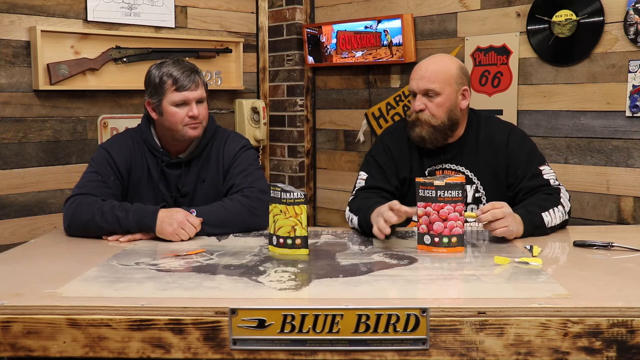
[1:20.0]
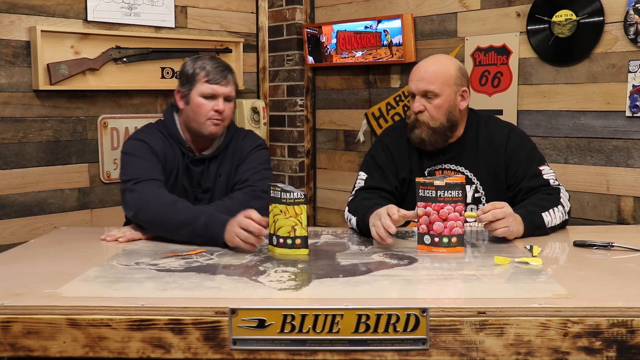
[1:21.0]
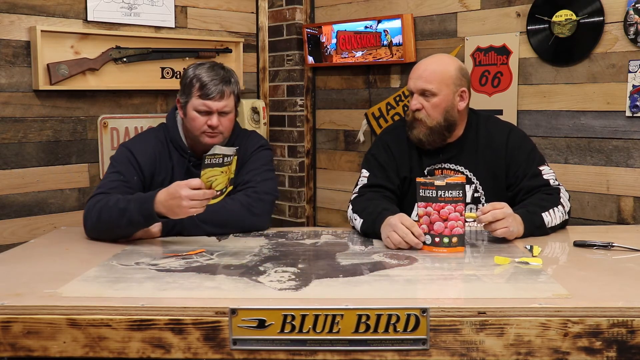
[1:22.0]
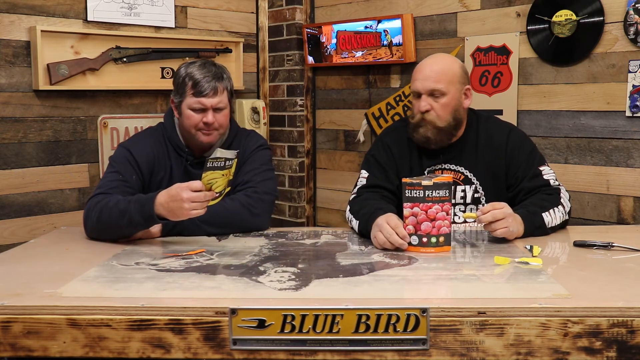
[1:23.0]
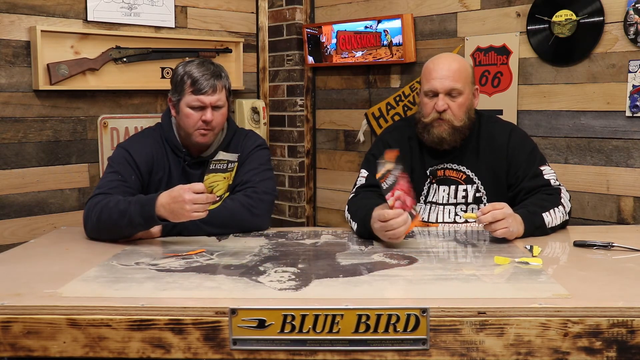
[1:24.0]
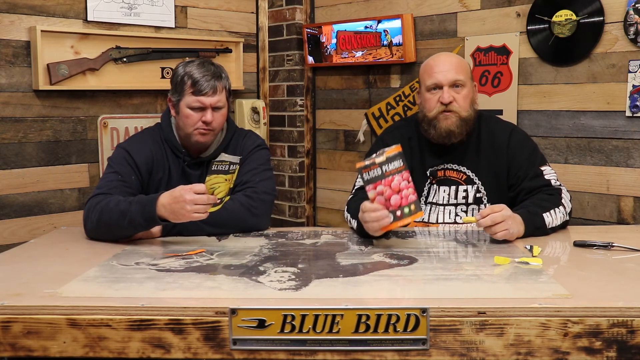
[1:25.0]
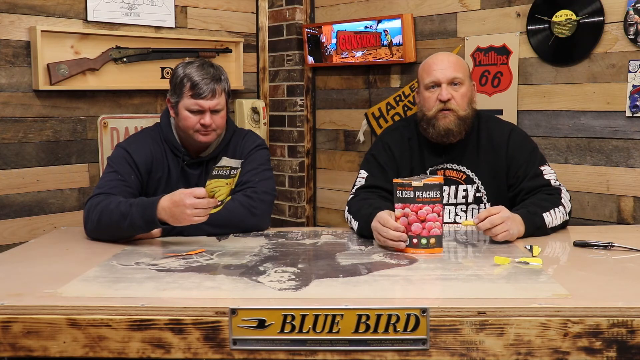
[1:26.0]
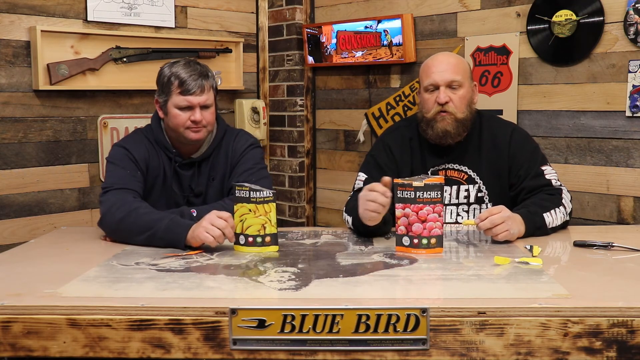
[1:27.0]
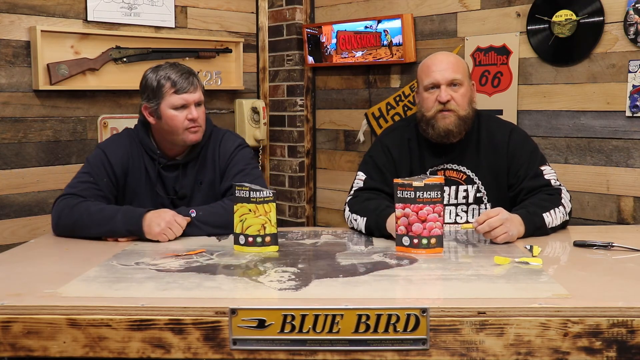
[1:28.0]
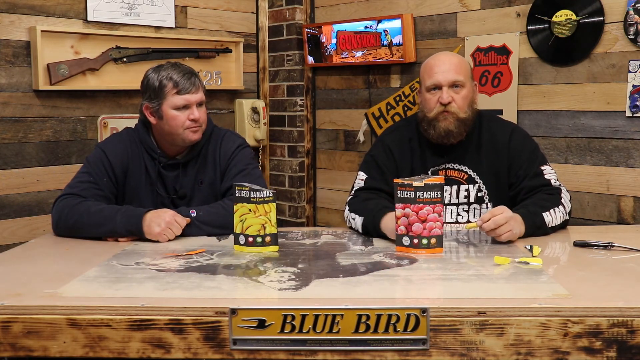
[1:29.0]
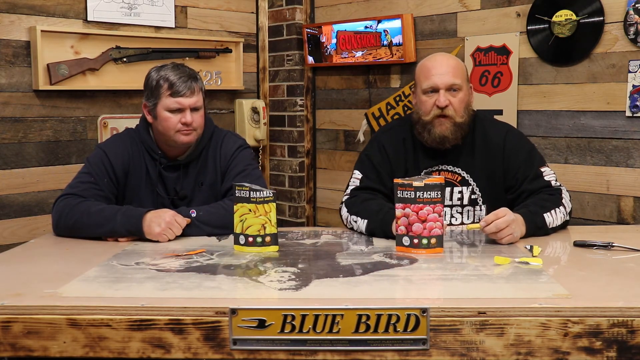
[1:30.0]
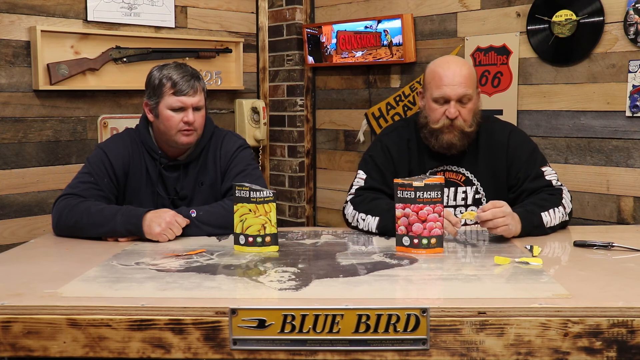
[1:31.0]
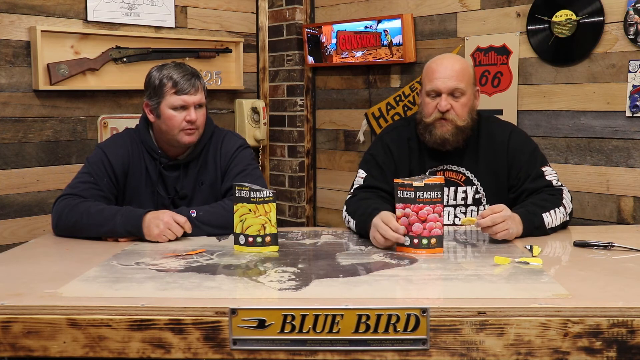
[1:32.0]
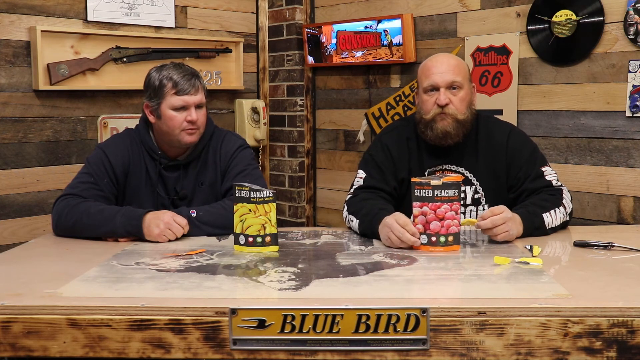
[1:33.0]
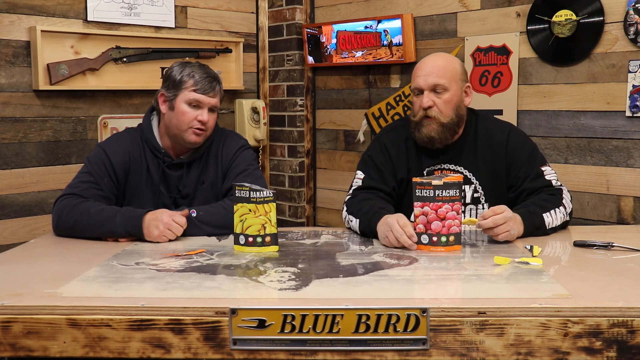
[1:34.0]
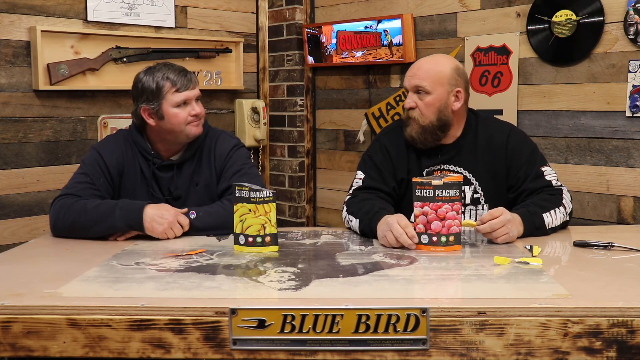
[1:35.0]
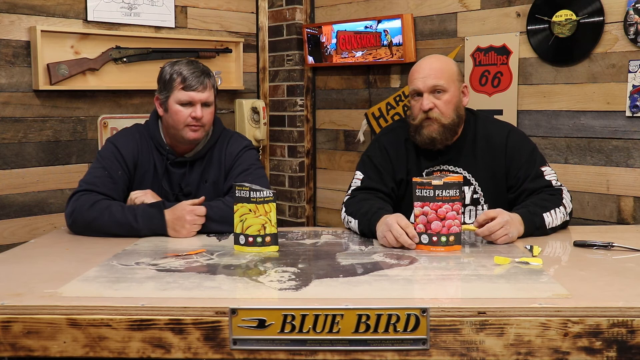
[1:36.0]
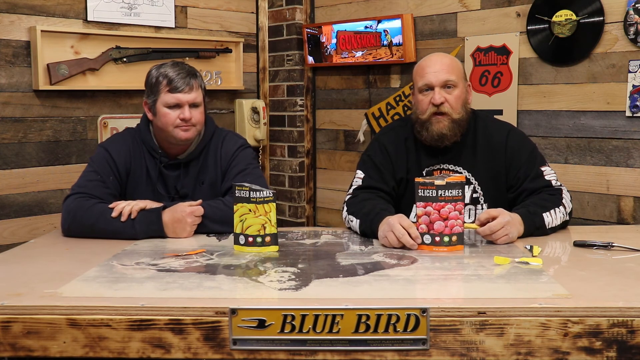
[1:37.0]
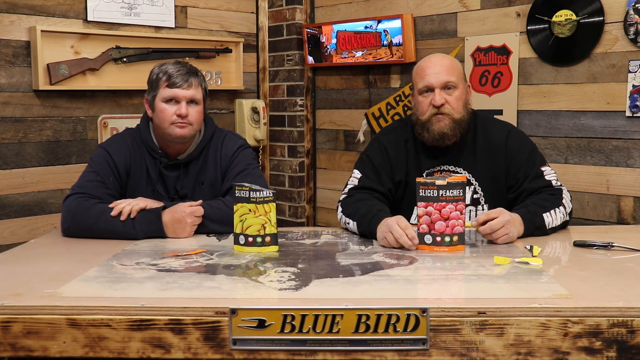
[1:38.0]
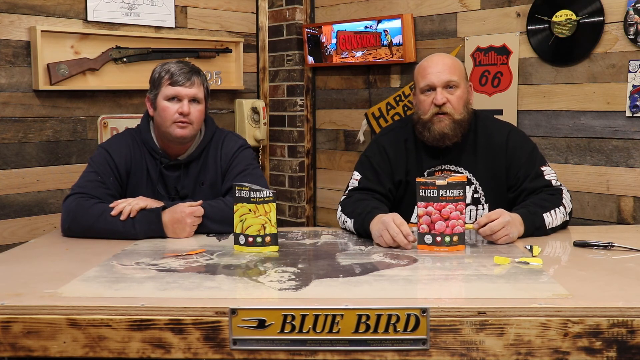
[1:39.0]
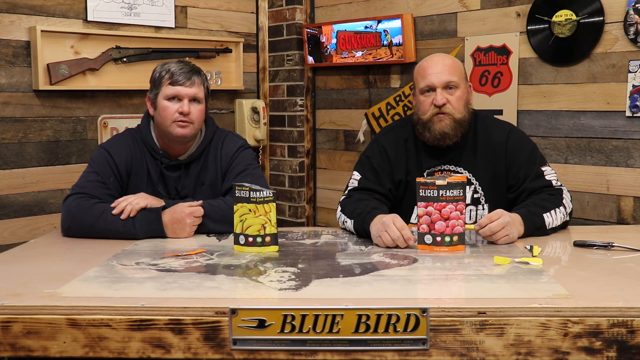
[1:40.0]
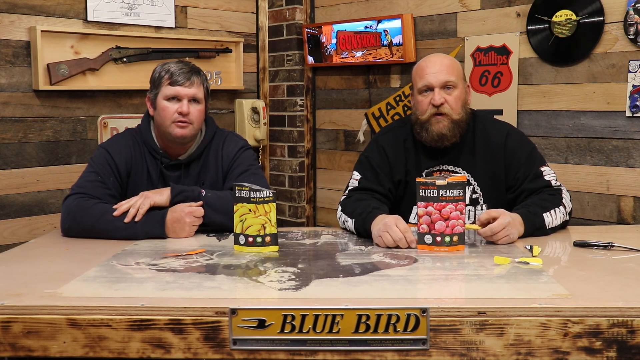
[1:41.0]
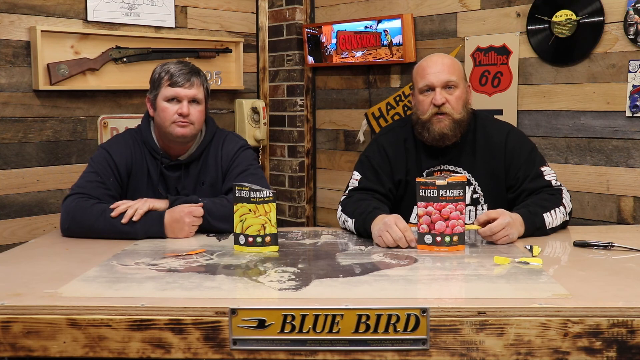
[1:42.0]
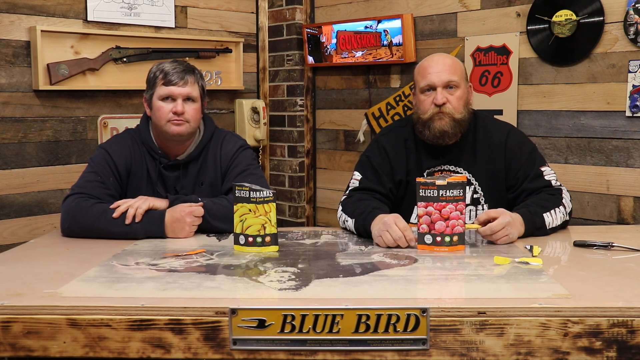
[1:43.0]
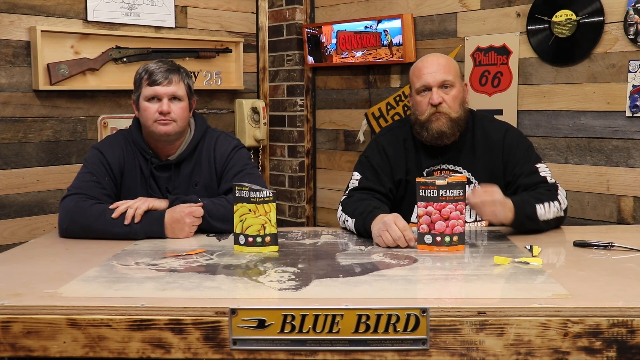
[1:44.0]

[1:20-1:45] The two men wear black tops, specifically black hoodies, and sit behind their desk, with a sticker that says "Bluebird" on the front of the desk. In the background there seems to be a rifle hanging on the wall, and there also seems to be an old model winding telephone, along with some LPs and some other stickers on the wall. On top of the table in front of the men are two sachets: the yellow sachet has "sliced bananas" written on it, and the pink sachet has "sliced peaches" written on it. The men still seem to be eating the contents of the sachets and seem to be discussing what they are eating. The man holding the sliced bananas sachet collapses it and seems to read something on it, almost as if reading the ingredients. They talk to each other briefly, then look at the camera and talk to the camera for a moment.